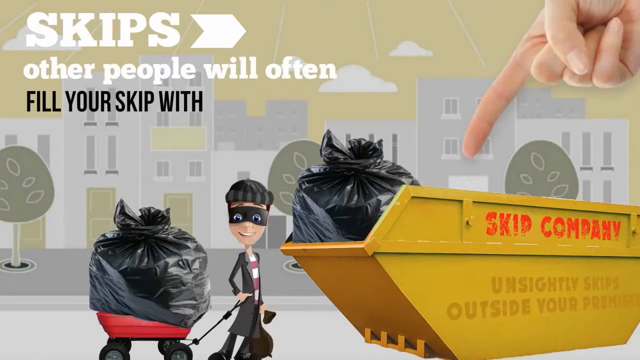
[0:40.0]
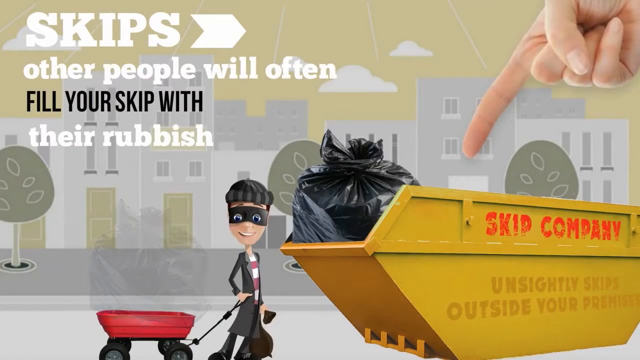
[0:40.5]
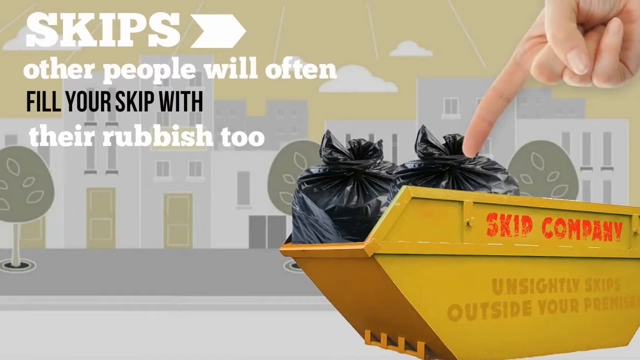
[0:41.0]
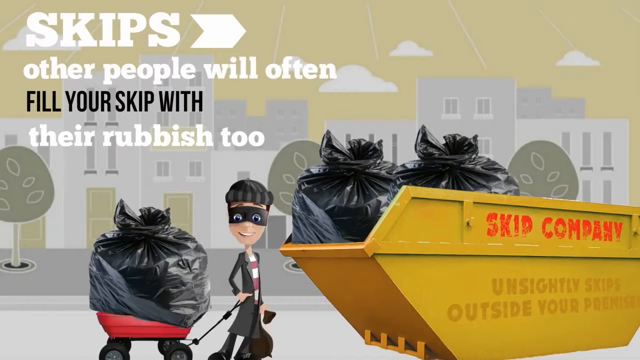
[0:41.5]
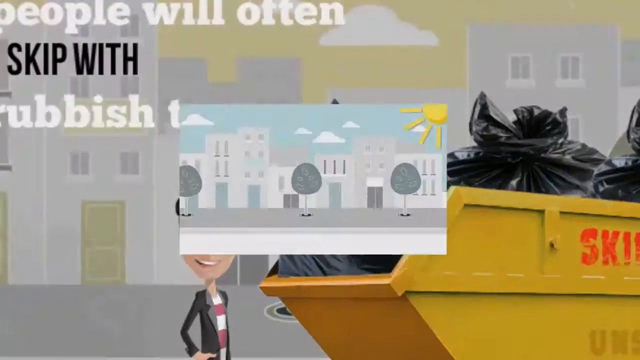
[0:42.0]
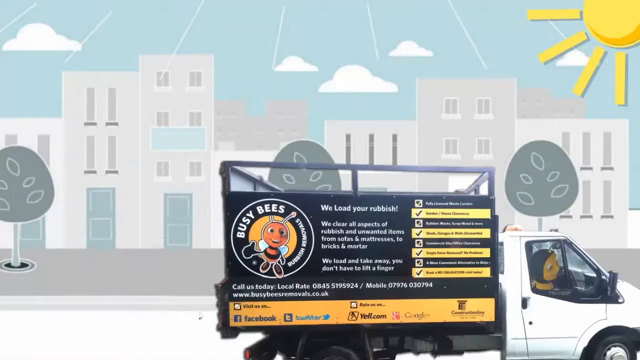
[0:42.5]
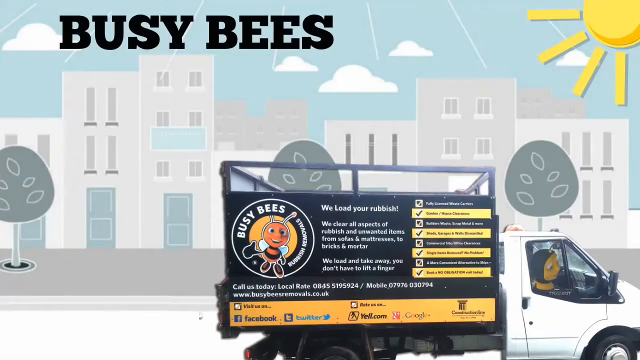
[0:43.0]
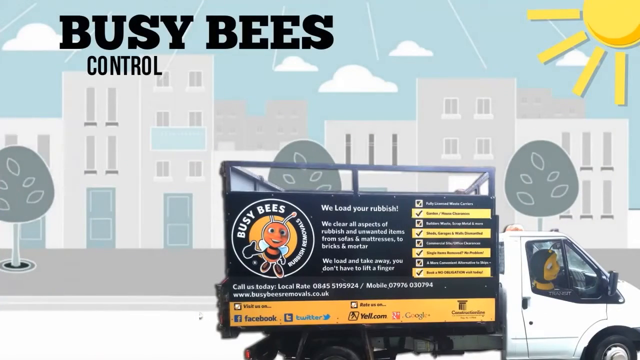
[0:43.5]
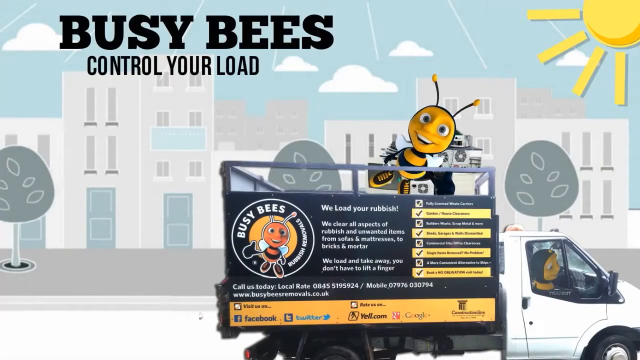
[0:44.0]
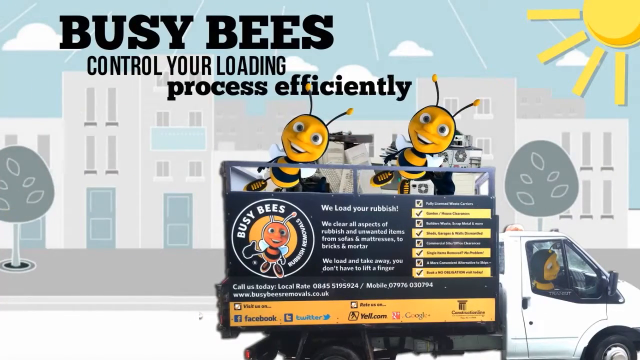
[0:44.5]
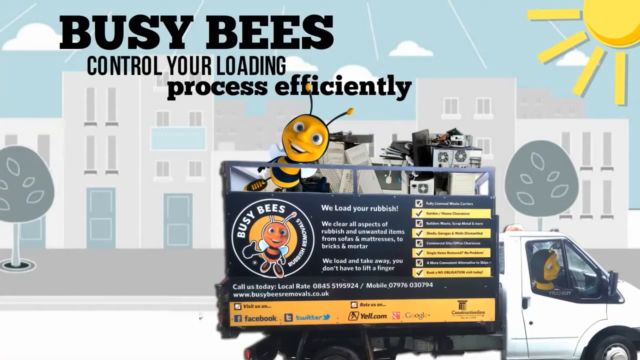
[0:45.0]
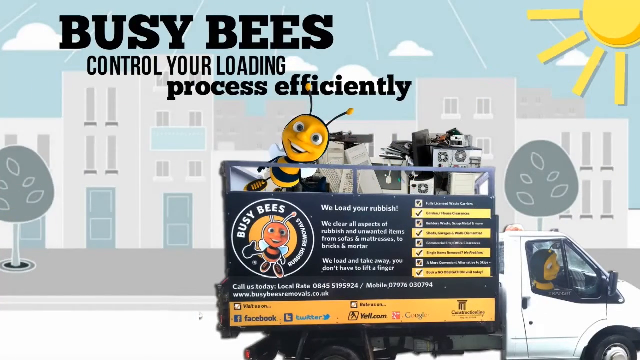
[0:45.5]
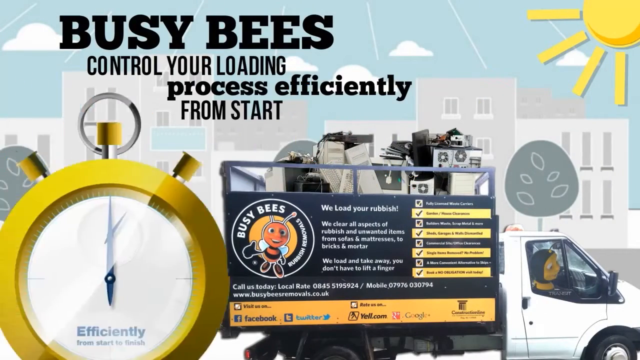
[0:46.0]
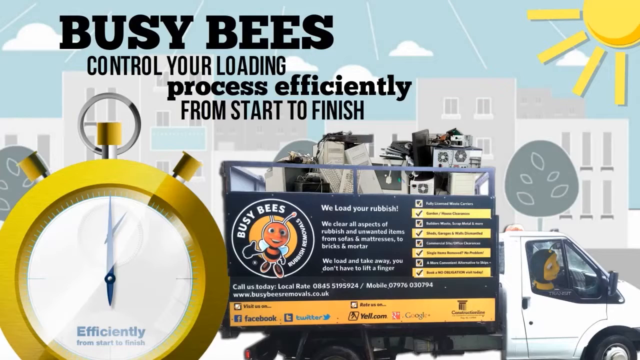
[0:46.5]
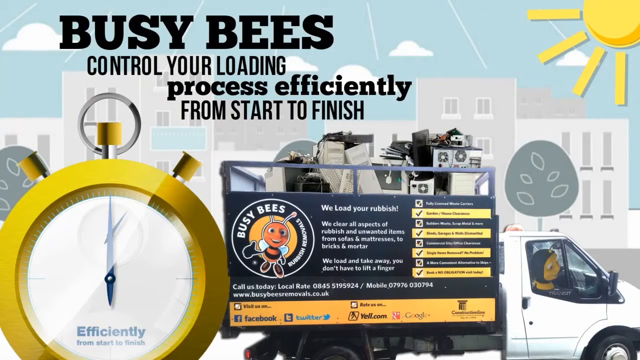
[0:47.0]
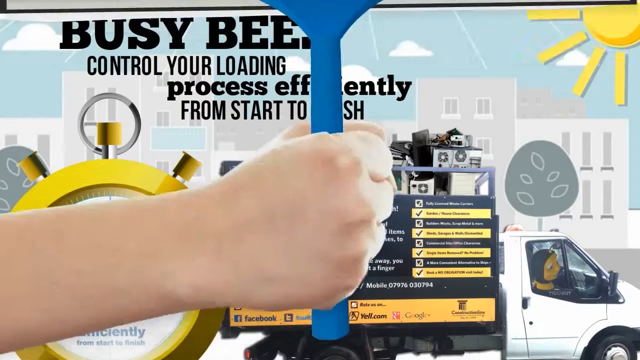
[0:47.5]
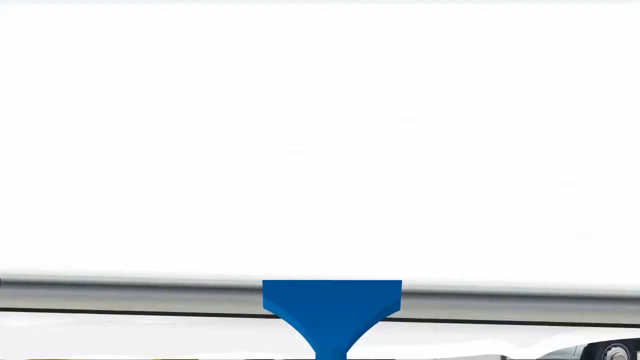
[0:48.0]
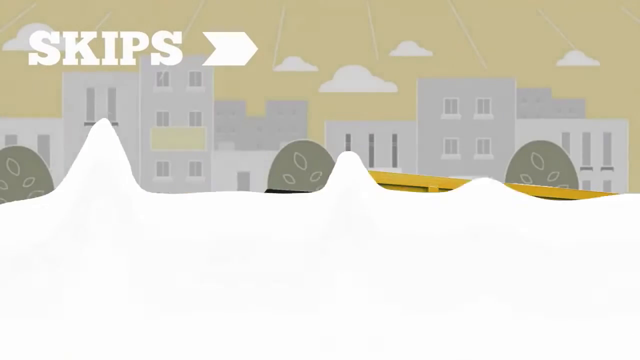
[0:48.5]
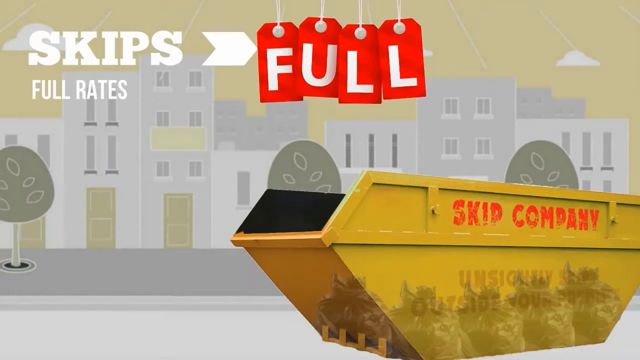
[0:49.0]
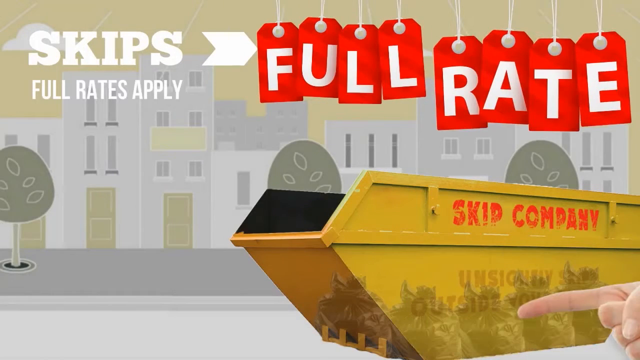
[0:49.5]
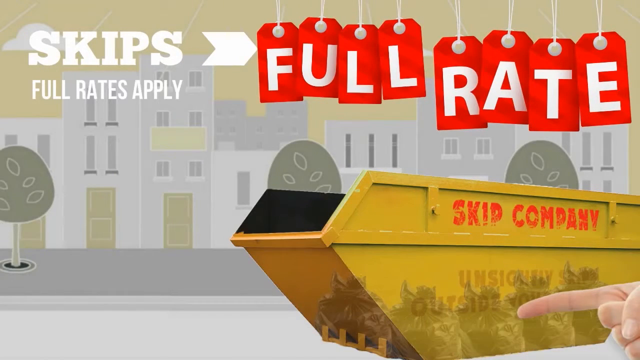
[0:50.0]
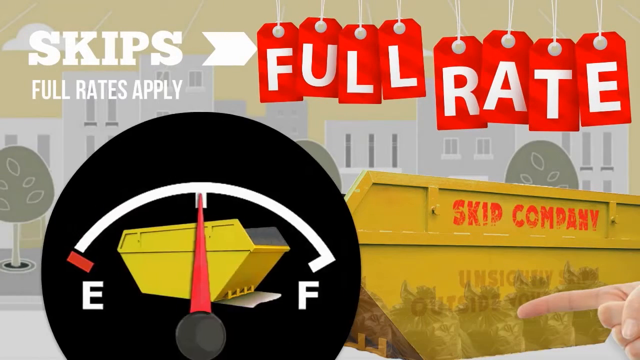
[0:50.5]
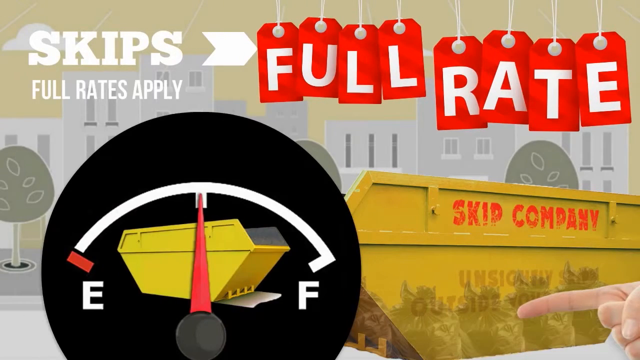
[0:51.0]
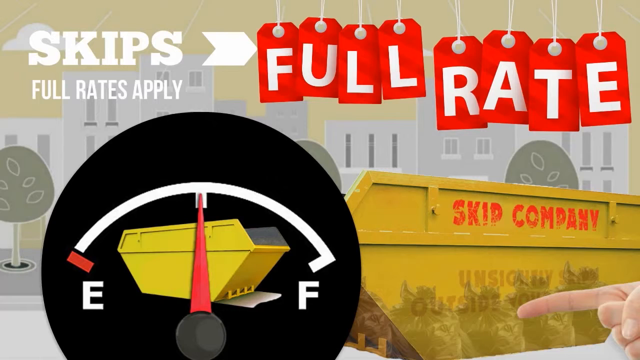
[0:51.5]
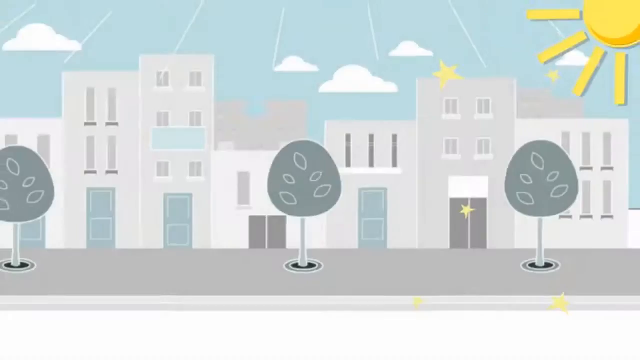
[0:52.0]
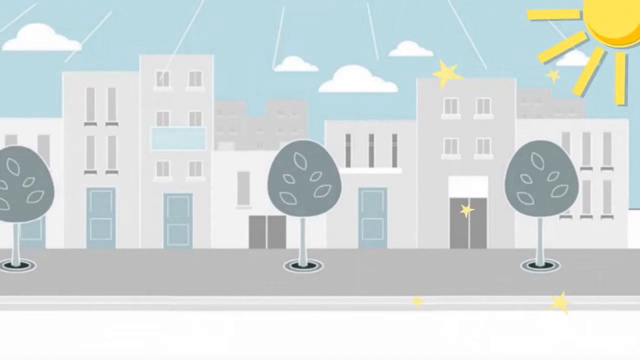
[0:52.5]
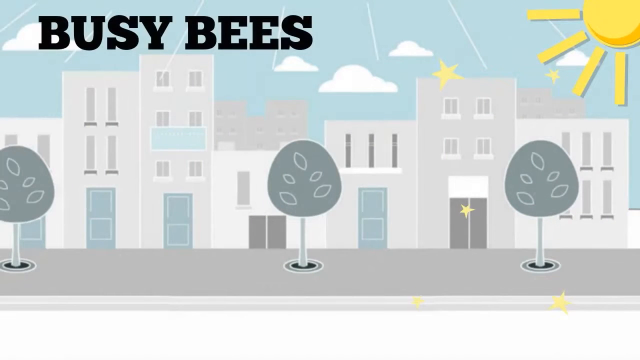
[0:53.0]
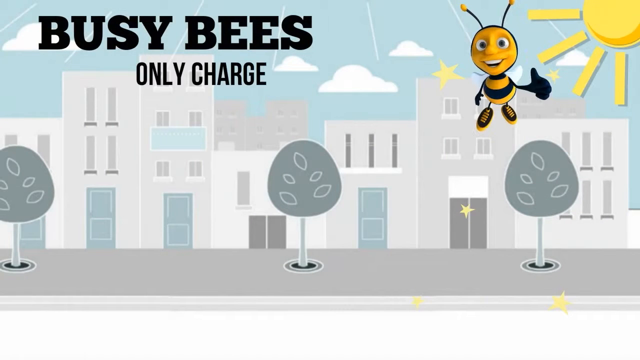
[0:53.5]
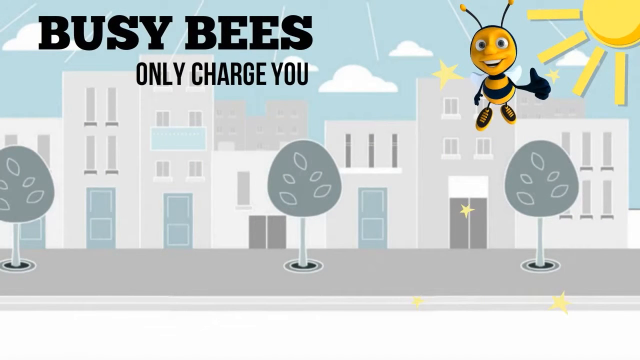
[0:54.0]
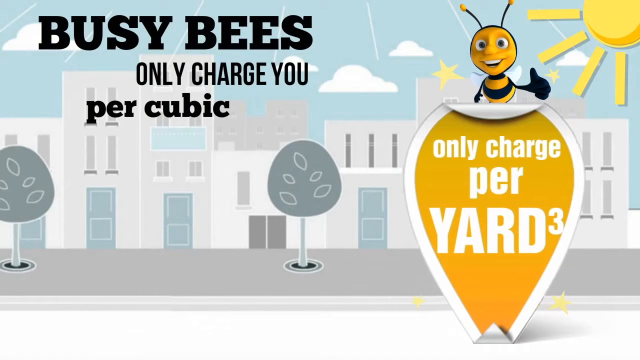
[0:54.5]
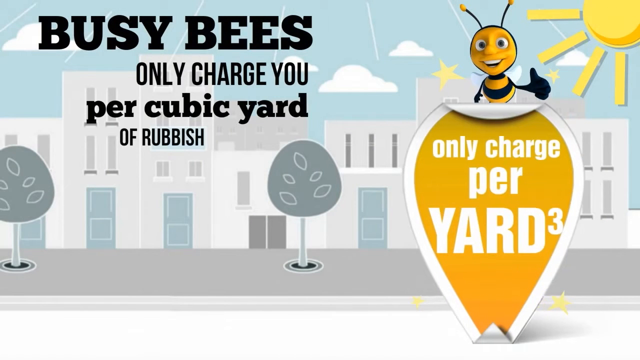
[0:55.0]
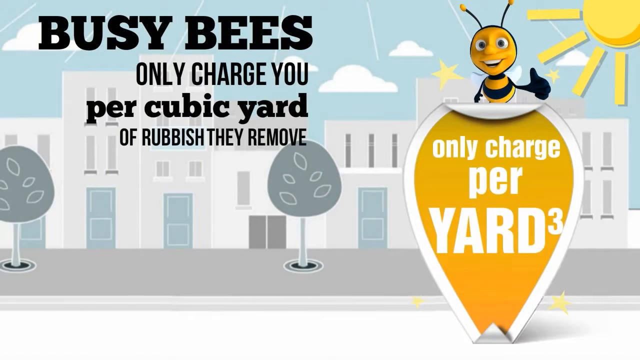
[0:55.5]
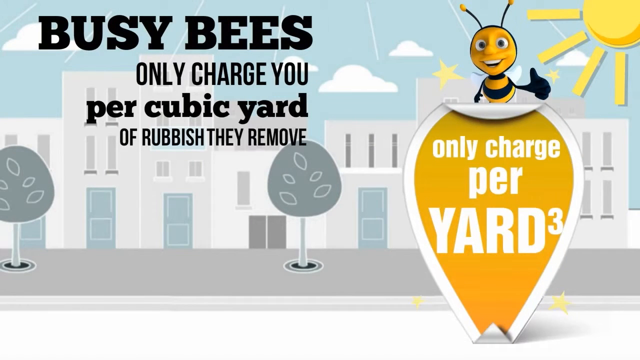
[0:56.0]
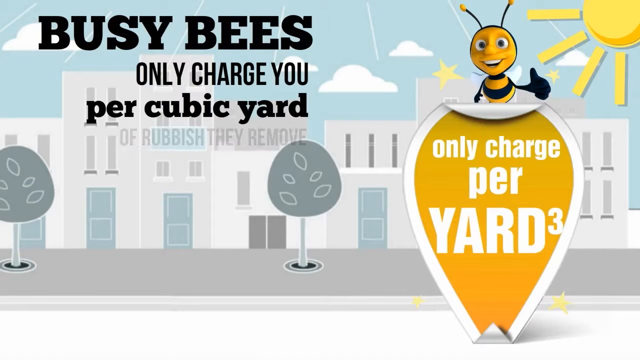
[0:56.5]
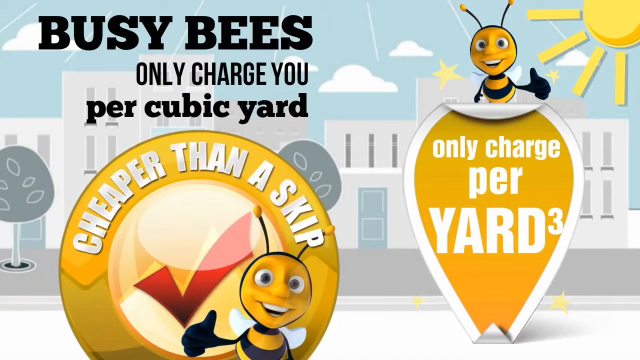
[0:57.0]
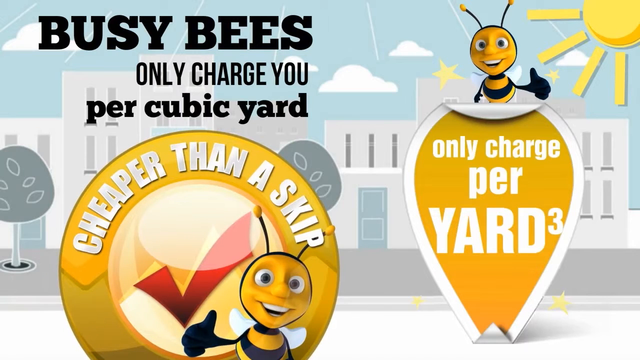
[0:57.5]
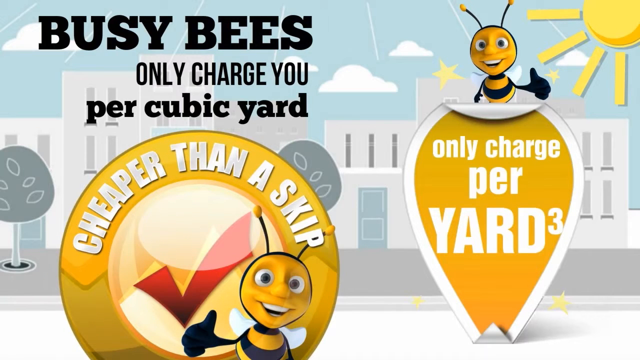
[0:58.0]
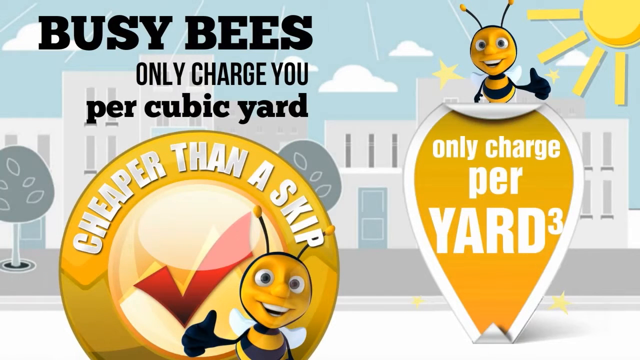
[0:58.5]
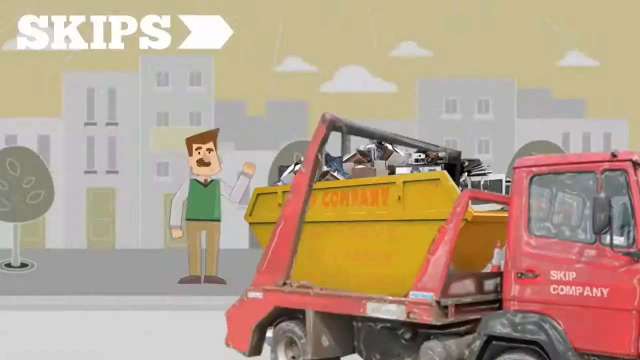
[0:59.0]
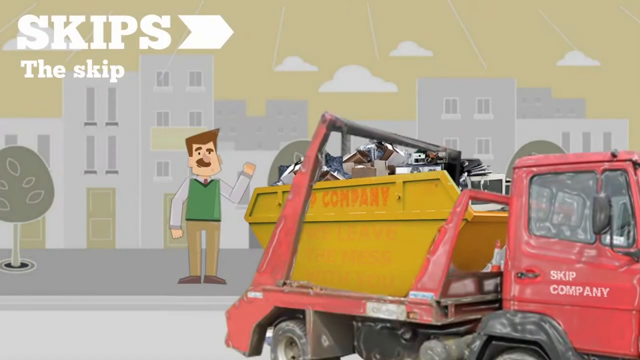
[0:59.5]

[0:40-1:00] A hand points its index finger downward toward the yellow container on the right side. The scene changes, and captions in the upper left read "Busy bees control your loading process efficiently from start to finish." A cartoon clock is on the left and the Busy Bees worker truck is on the right. A hand appears from the left side and pulls something down, apparently a curtain. In the next scene, captions beginning with "Skips" appear at the top. The scene then changes to captions in the upper left reading "Busy bees only charge you per cubic yard." On the right, a cartoon bee is on top of a sign that says "Only charged per yard, per cubic yard."